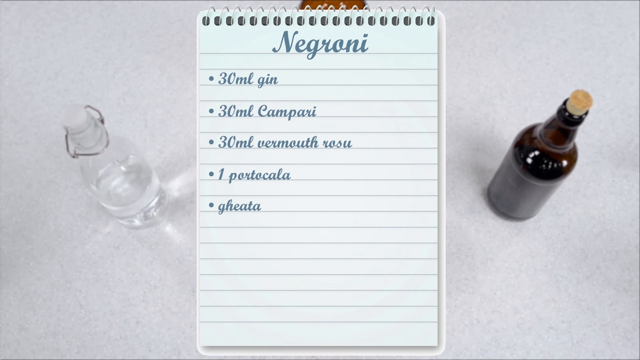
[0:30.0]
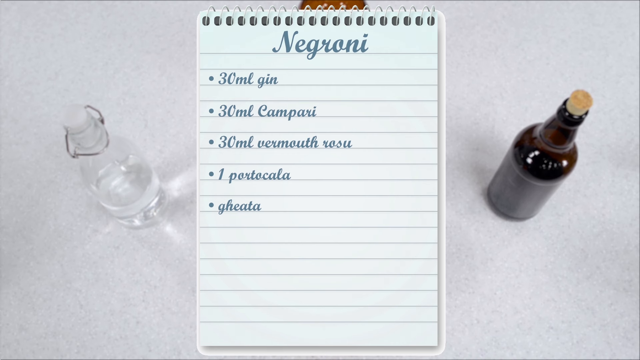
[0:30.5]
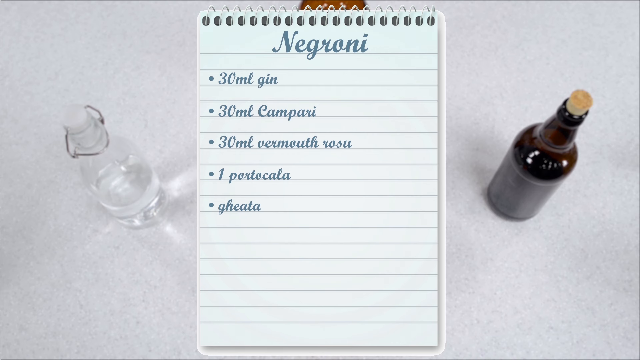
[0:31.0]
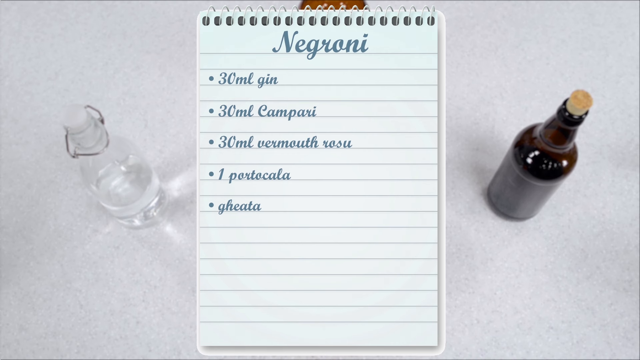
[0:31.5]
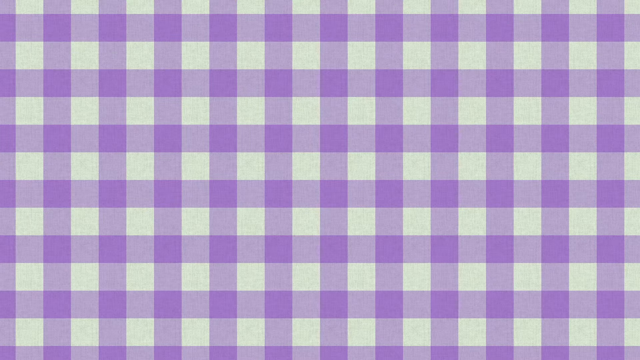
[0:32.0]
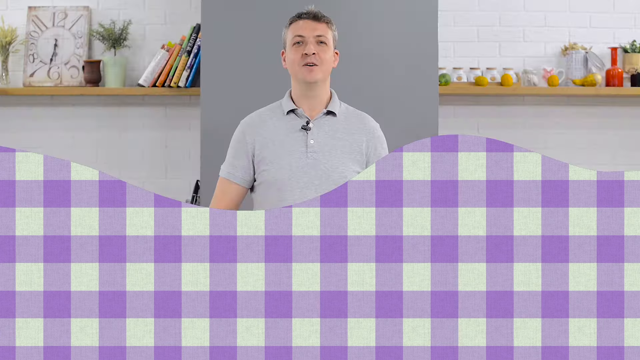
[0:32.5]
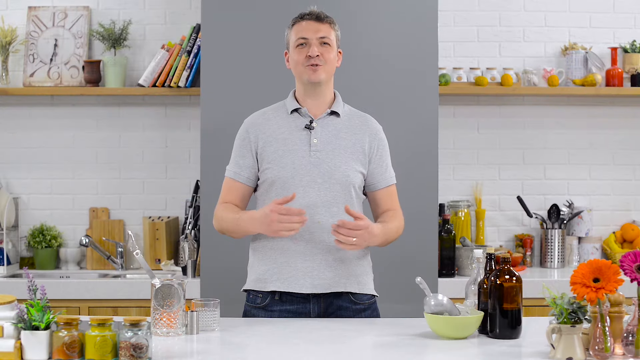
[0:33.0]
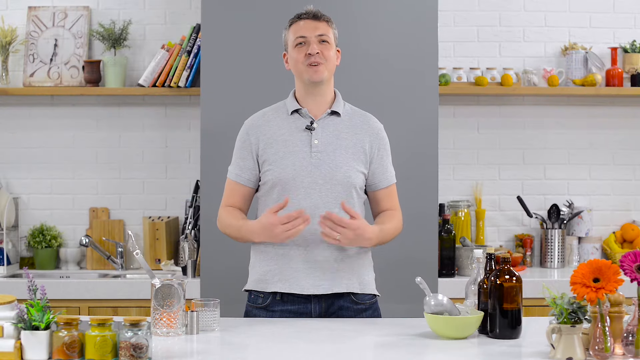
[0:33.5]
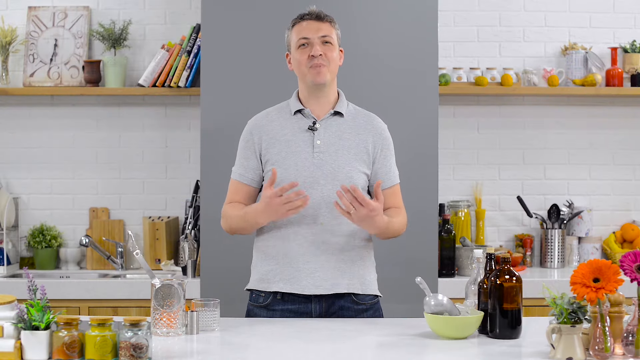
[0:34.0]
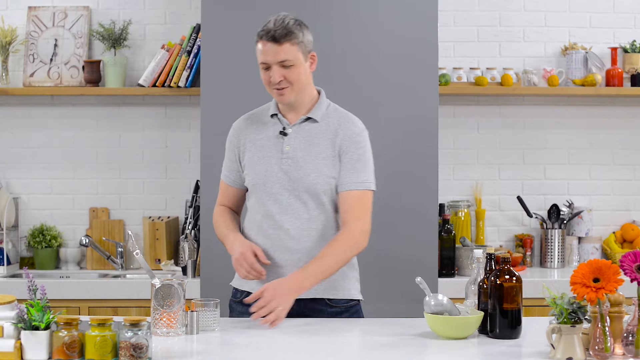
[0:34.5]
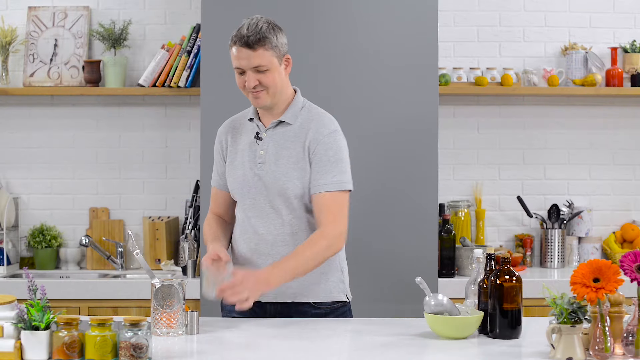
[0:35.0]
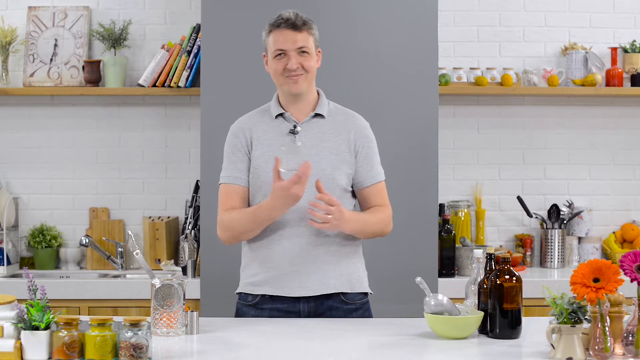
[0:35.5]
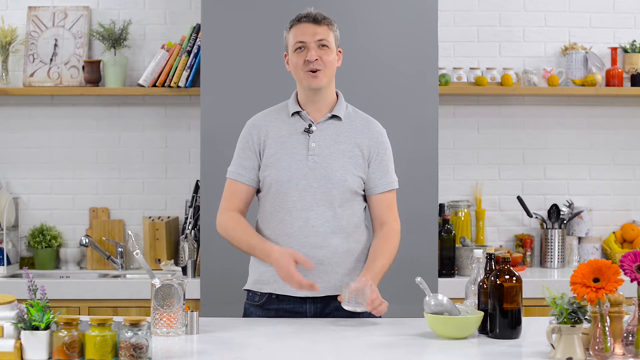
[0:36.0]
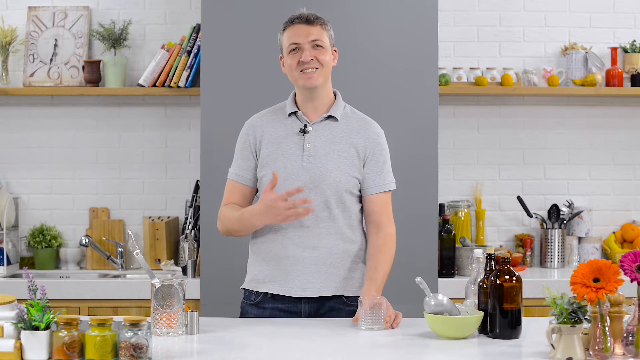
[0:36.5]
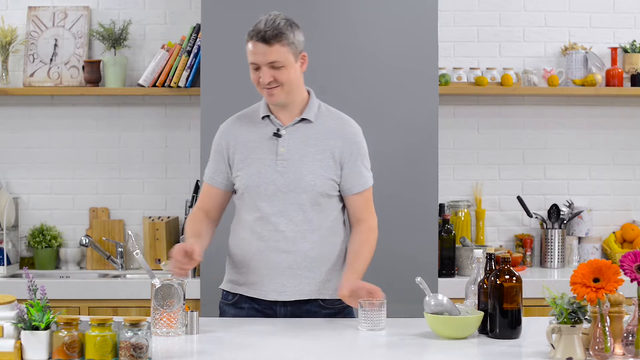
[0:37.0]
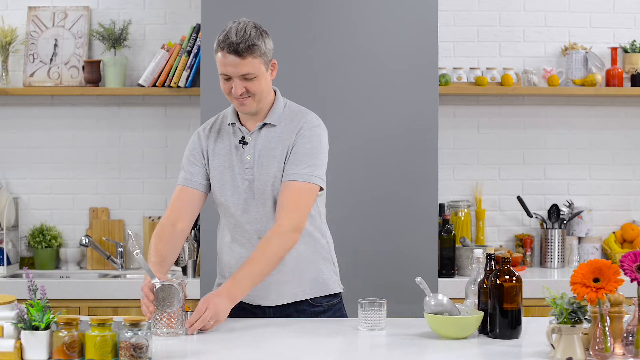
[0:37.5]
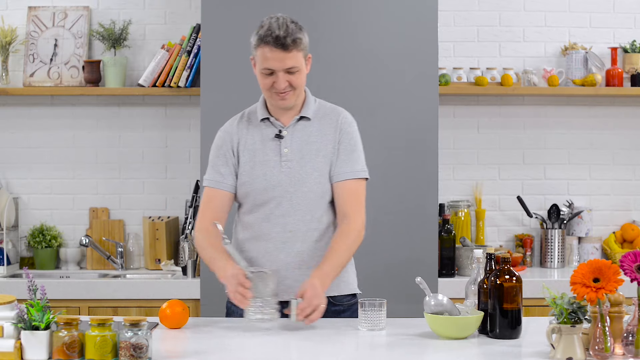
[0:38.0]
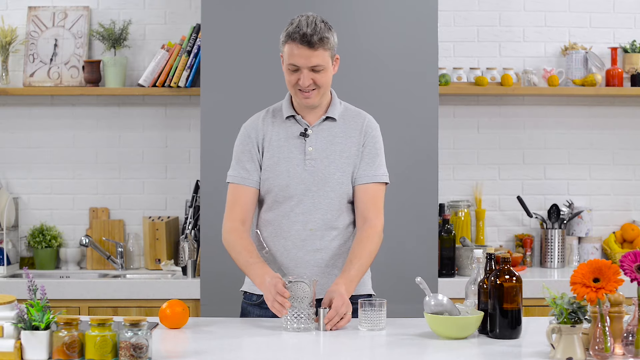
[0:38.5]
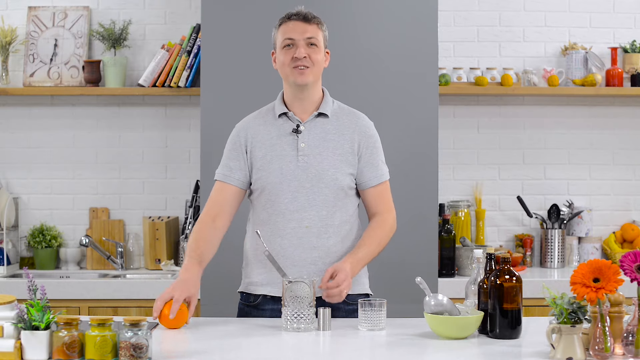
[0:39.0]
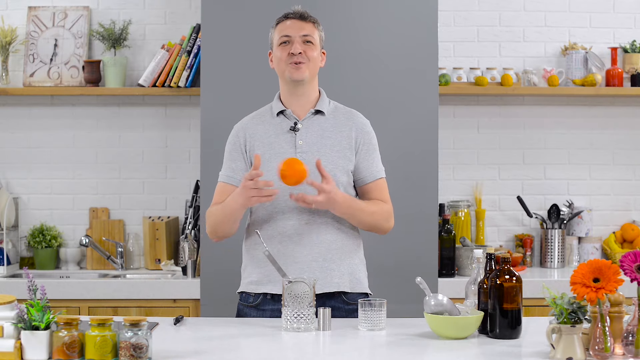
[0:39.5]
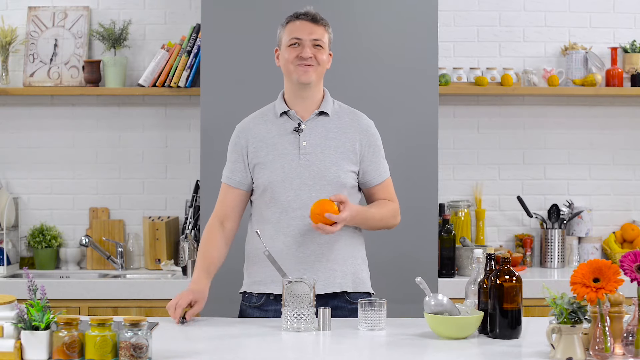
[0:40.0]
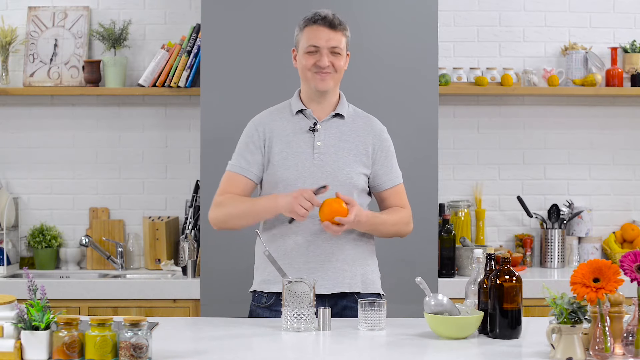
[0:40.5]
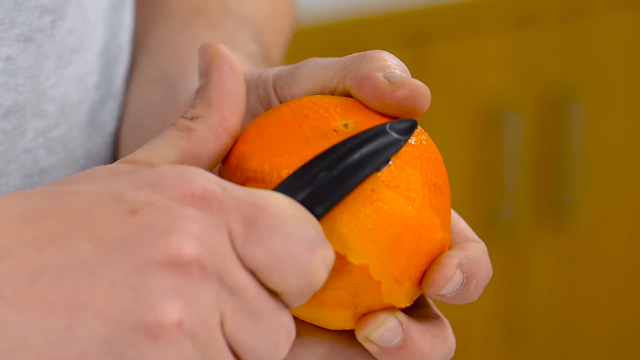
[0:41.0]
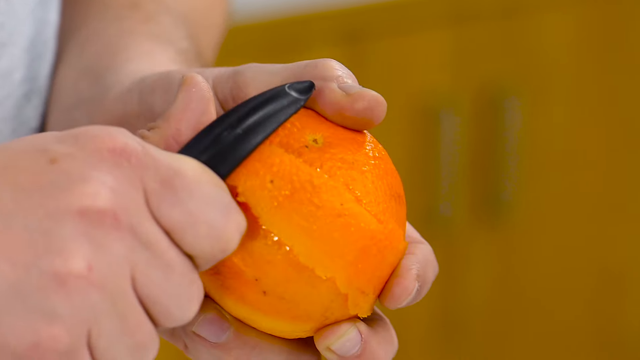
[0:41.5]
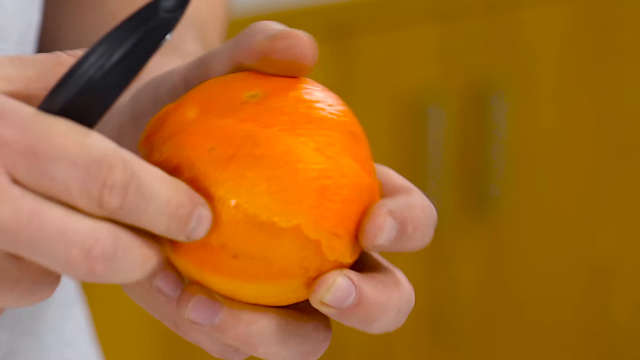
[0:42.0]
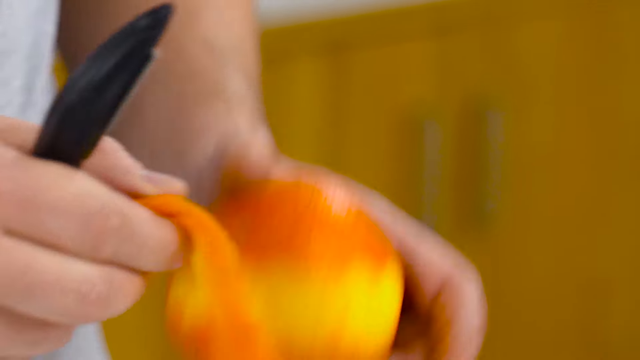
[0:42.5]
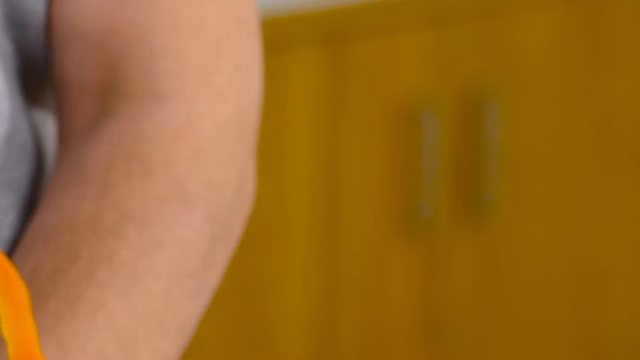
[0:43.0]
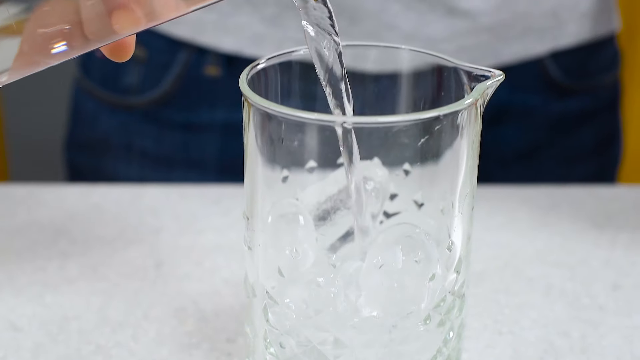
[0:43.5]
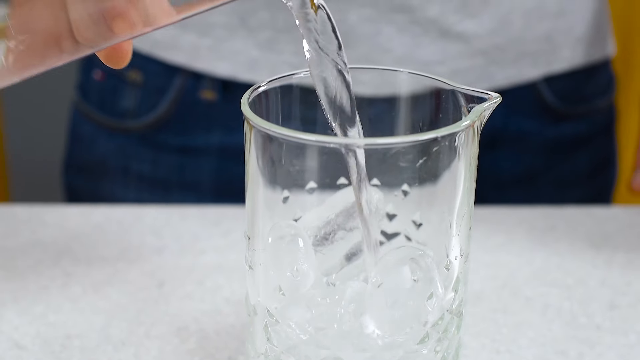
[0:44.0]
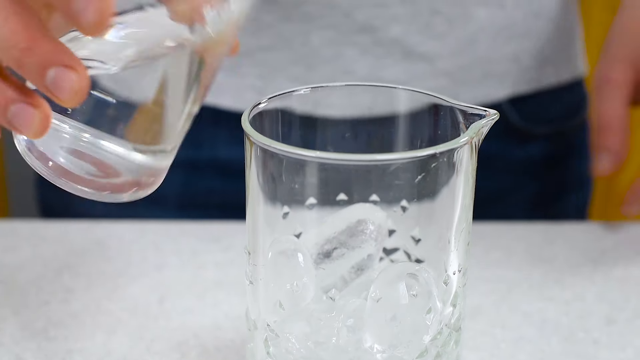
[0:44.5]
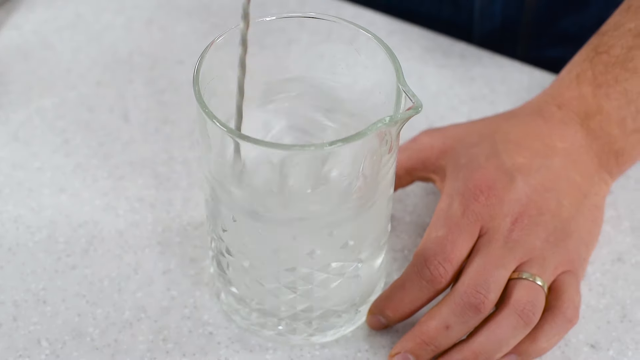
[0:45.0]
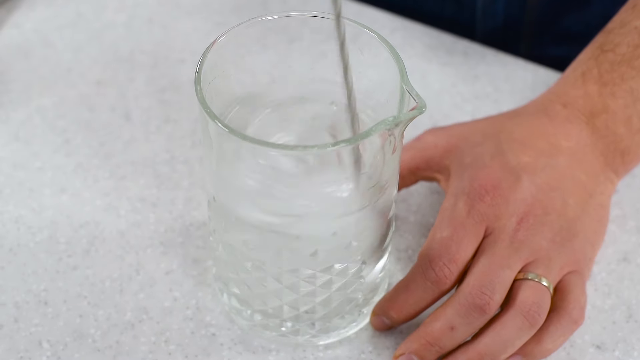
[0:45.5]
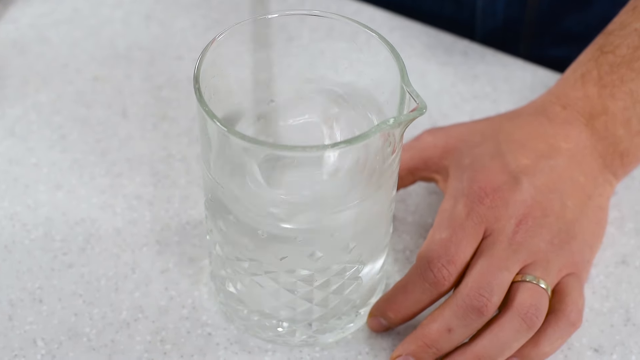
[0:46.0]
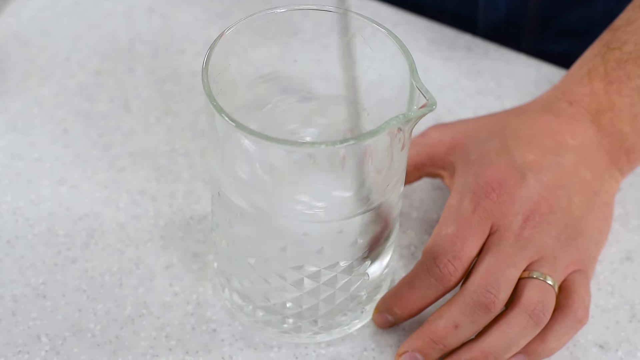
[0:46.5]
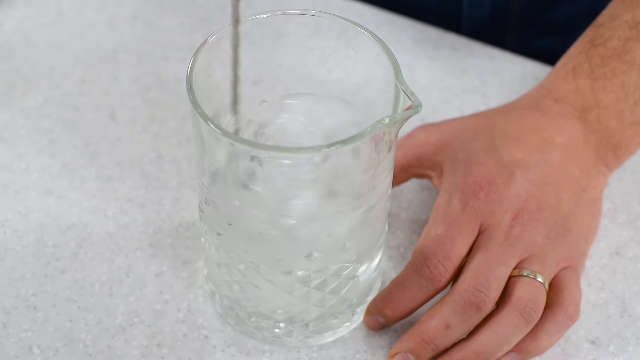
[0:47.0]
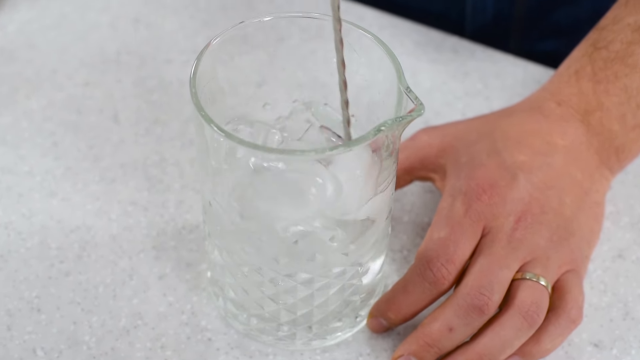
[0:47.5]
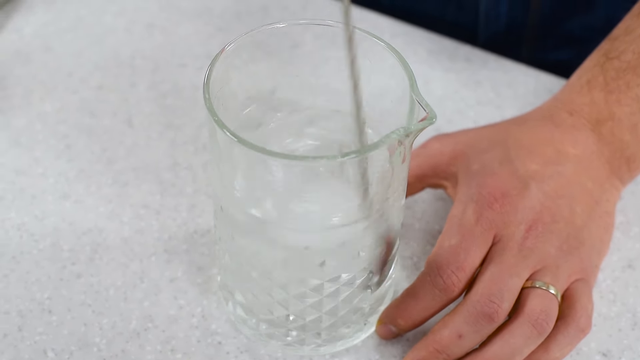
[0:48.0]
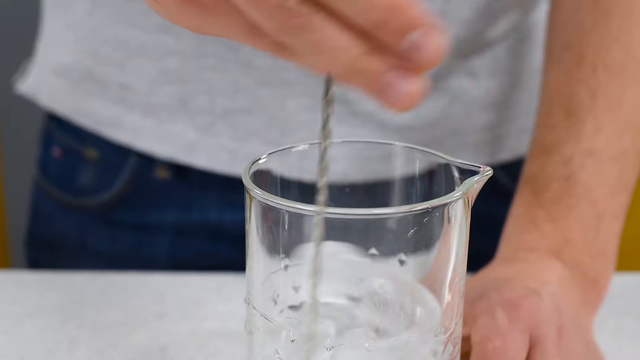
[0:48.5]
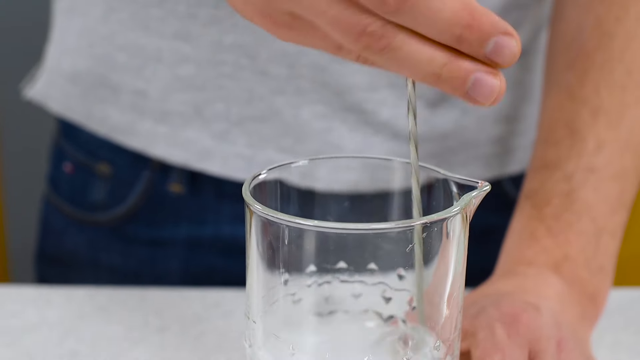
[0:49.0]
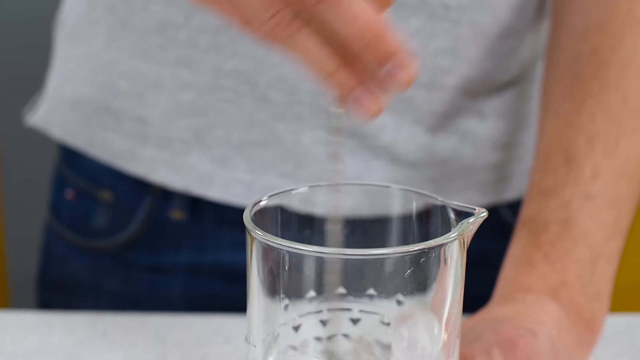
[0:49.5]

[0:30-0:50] A man is standing in what appears to be a studio kitchen with a counter in front of him. Behind him is a panel, and to either side are shelves holding what look like kitchen utensils, some pasta, cookbooks, a clock, maybe some knives, and a couple of little plants. The man has short gray hair and wears a short-sleeved shirt. He smiles as he talks directly to the camera and gestures with his hands. He picks up a glass beaker from the countertop and moves it right in front of him, then picks up an orange and tosses it from one hand to the other. A close-up shows him cutting away part of the orange's peel. The camera then cuts to him pouring a clear liquid into a beaker, and then stirring the liquid with ice in the beaker using a long-handled silver spoon.